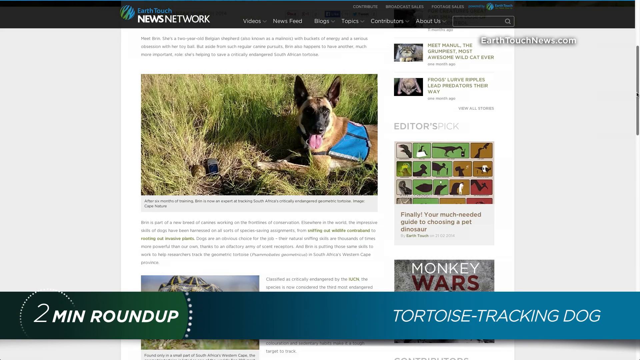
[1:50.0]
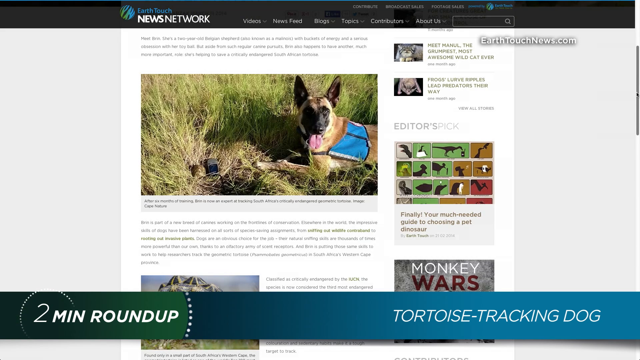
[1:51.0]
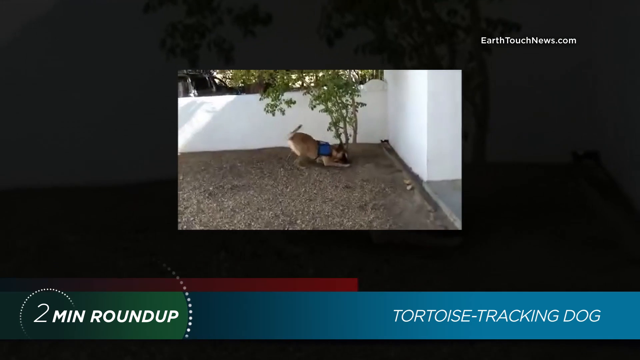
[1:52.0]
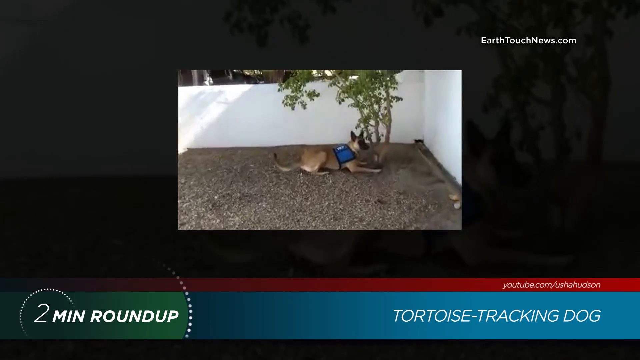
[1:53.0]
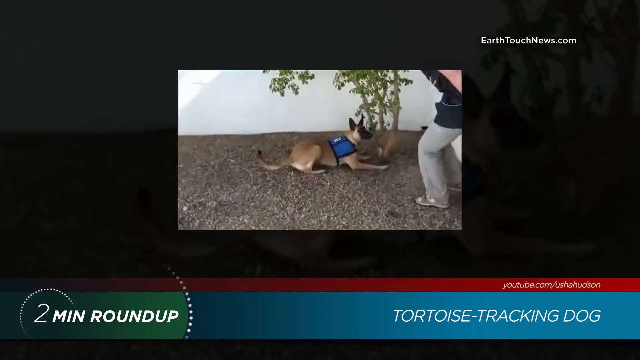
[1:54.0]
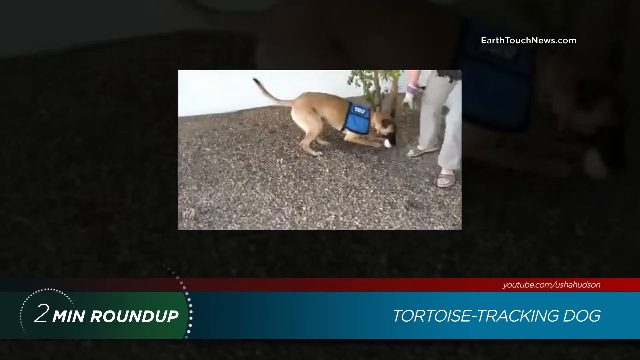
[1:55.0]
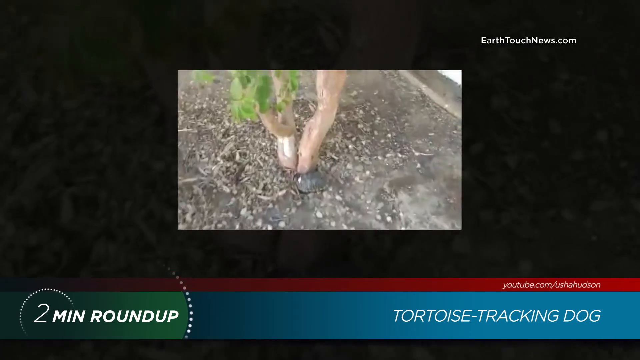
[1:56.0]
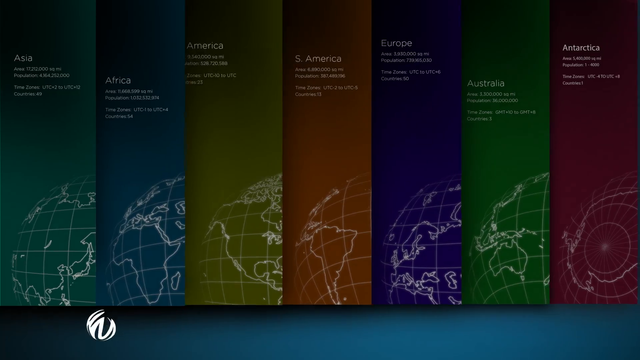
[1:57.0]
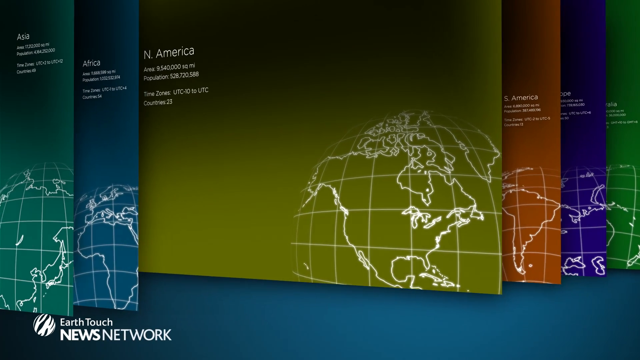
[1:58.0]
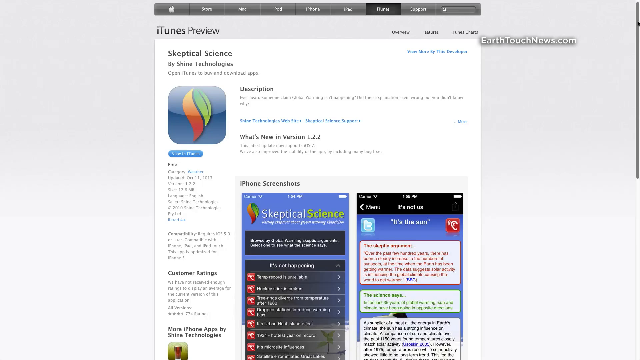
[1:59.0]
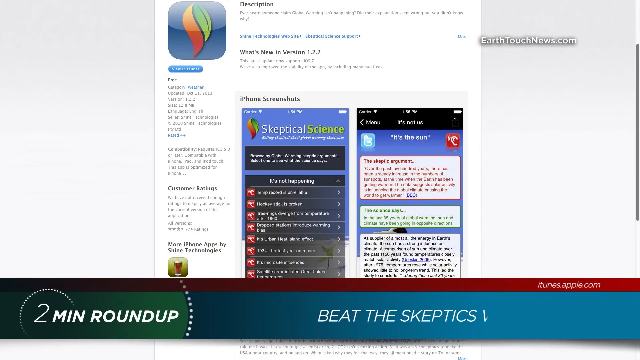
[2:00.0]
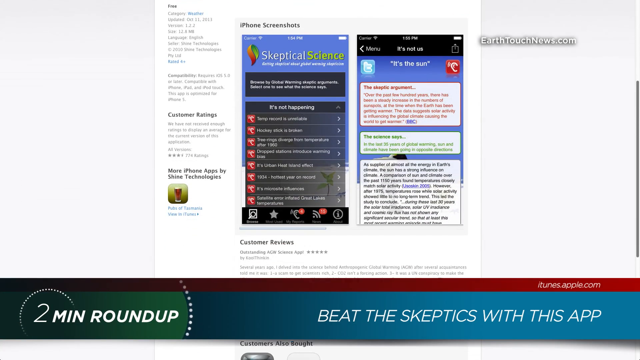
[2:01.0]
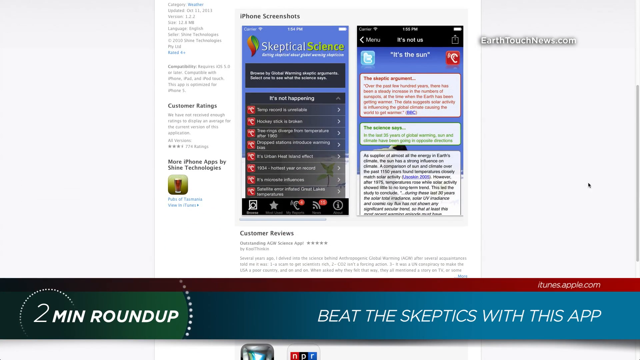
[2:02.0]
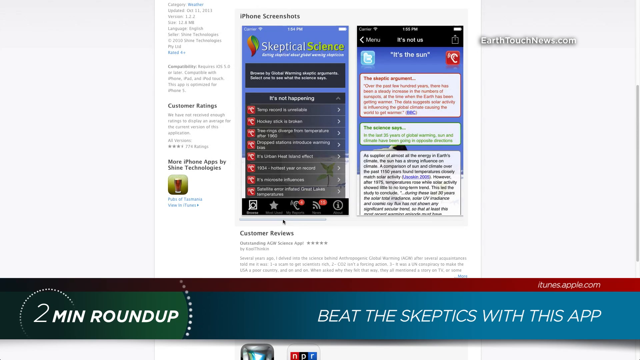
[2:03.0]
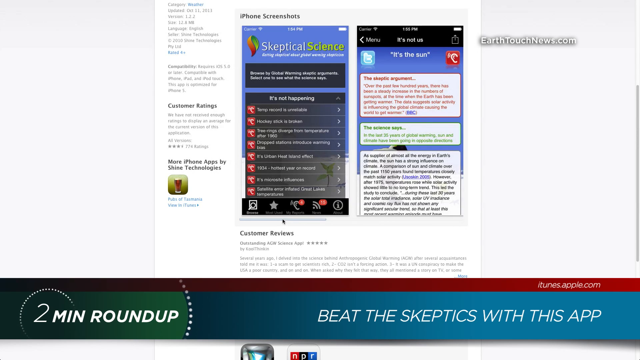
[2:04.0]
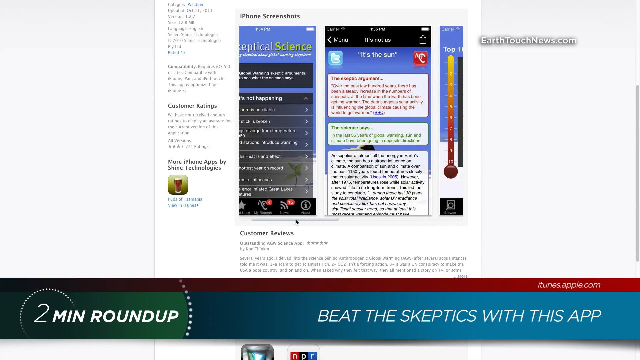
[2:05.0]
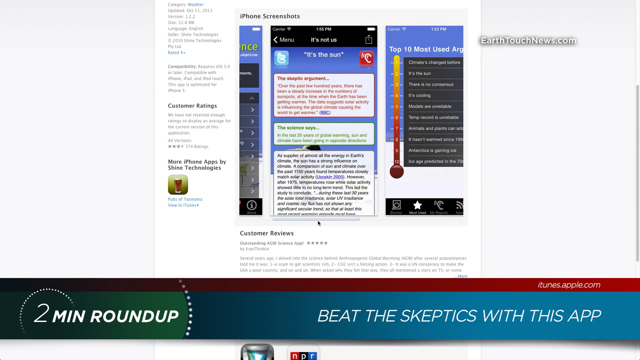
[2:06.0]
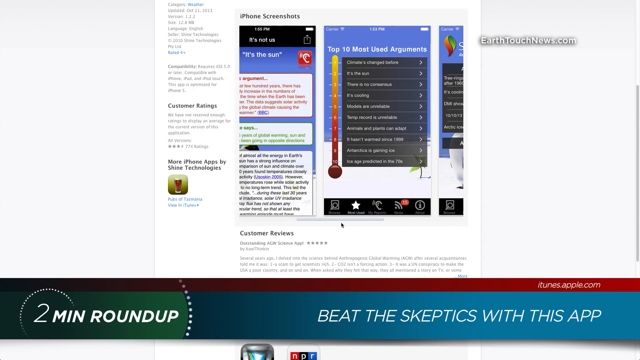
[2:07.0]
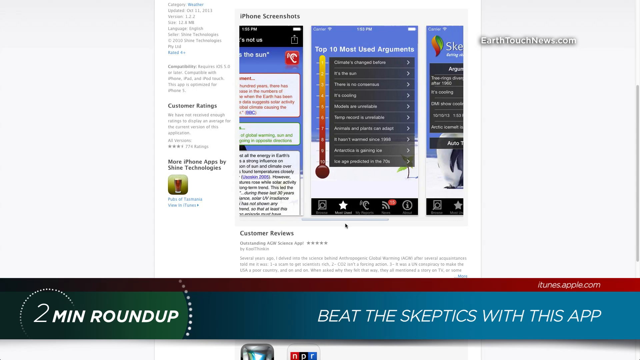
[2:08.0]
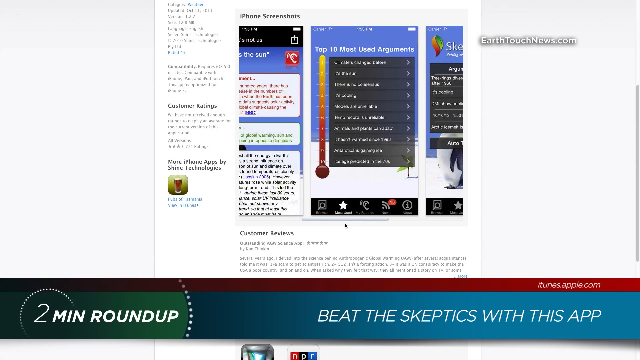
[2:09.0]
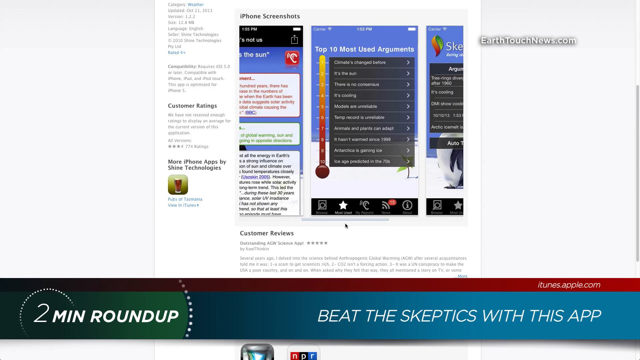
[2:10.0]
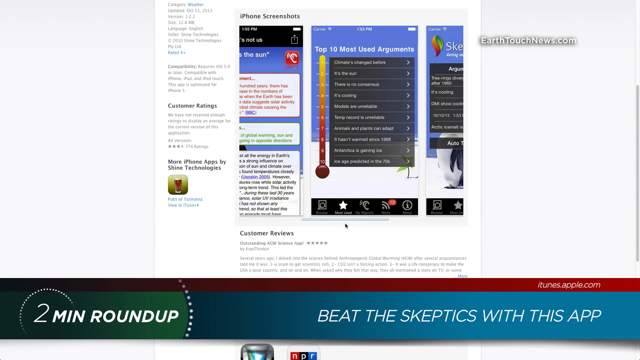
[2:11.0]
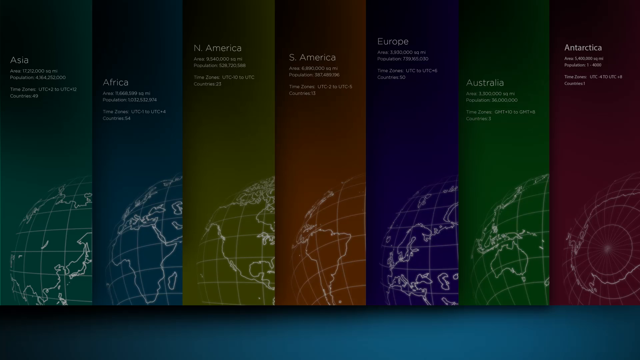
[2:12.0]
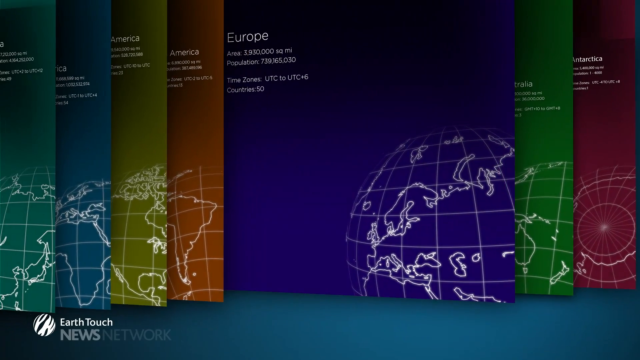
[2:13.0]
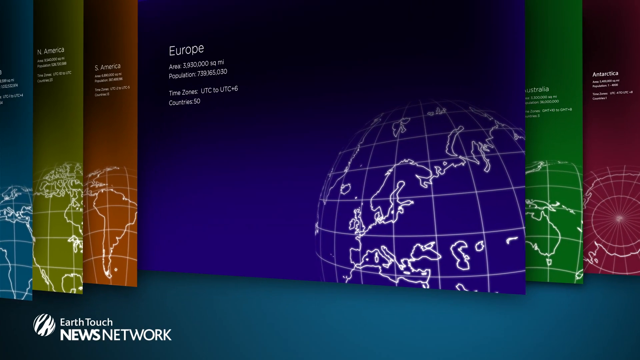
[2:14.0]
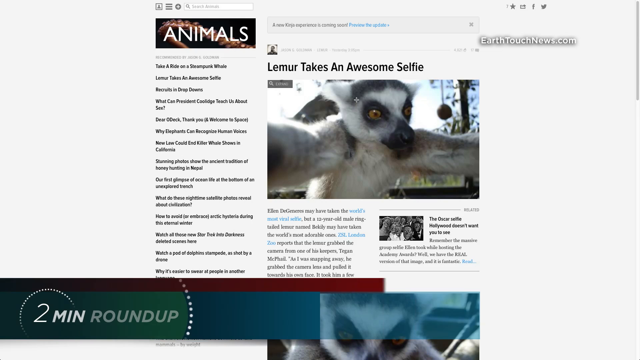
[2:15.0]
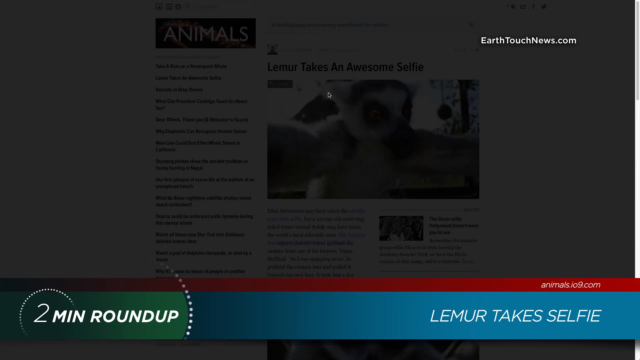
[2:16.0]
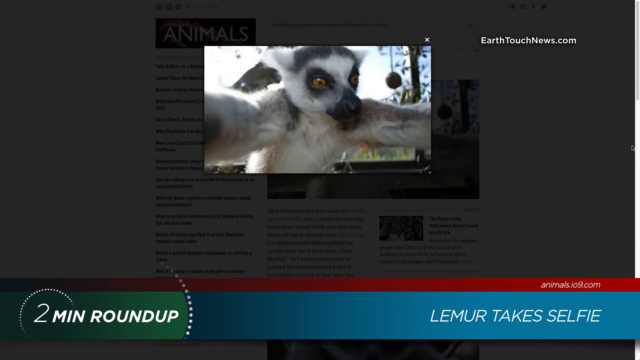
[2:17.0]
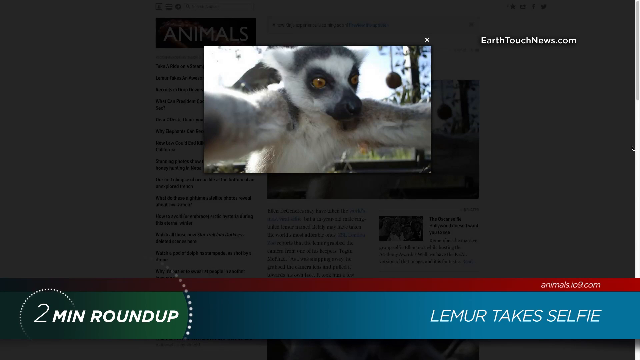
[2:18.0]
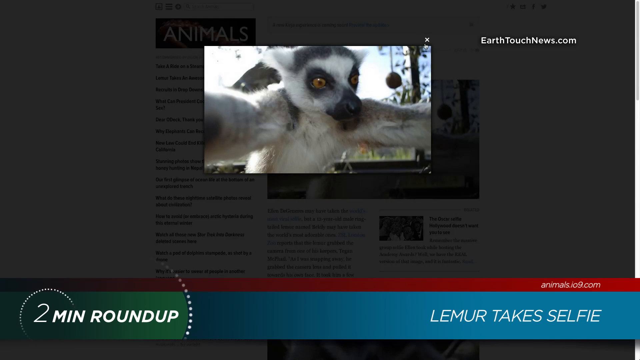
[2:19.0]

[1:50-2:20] A web page shows a picture of a brown dog with big ears wearing a blue vest. It changes to a video of the dog playing at the base of a tree, surrounded by a white wall. A person who appears to be a woman, wearing a dark top, light shoes and light pants, comes and gives the dog a toy, and the dog kind of runs away with it. Next comes a scene showing different countries, each color-coded with a globe, such as Asia, Africa and North America, apparently indicating North America. A web page then reads "Skeptical Science", and another reads "It's the sun"; the page is moved and then scrolled to the right, bringing up another that says "Top 10 most used arguments". After a little more scrolling, the video again goes to the page showing the different colored countries. Then a web page shows a lemur; the picture of the lemur is clicked and then closed.